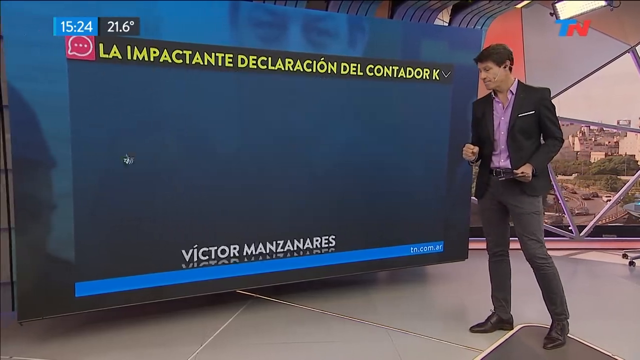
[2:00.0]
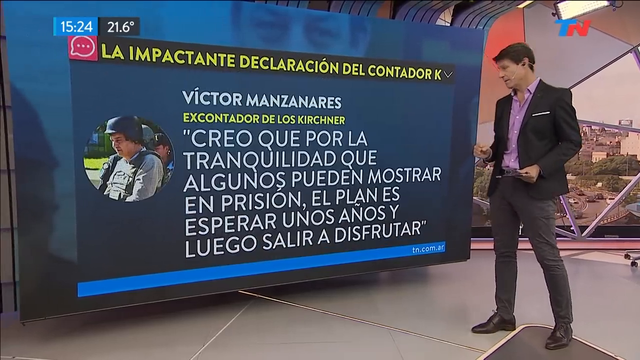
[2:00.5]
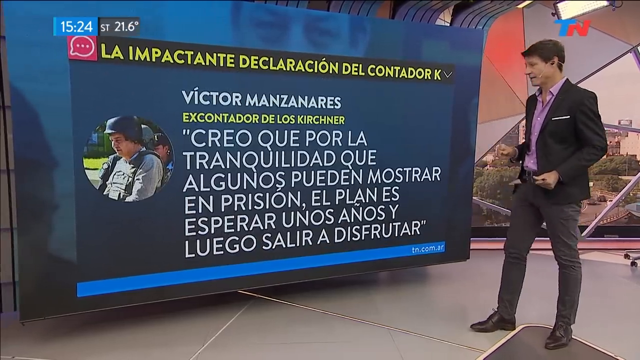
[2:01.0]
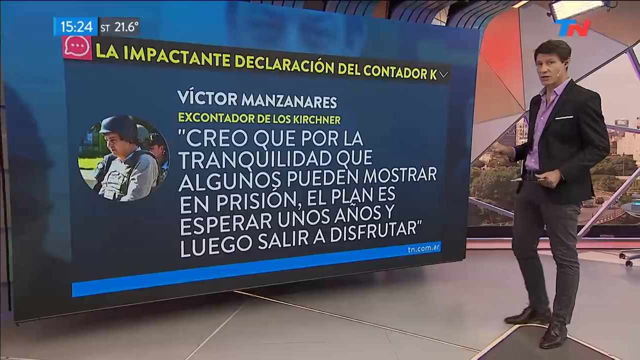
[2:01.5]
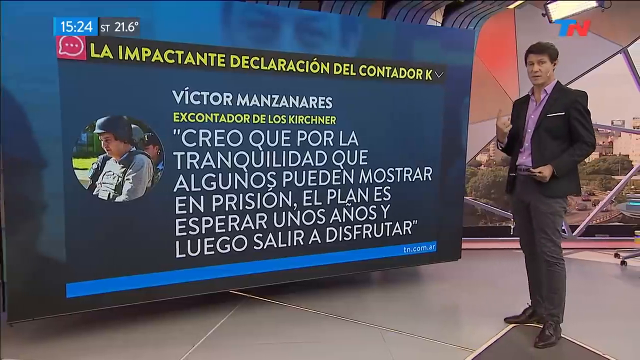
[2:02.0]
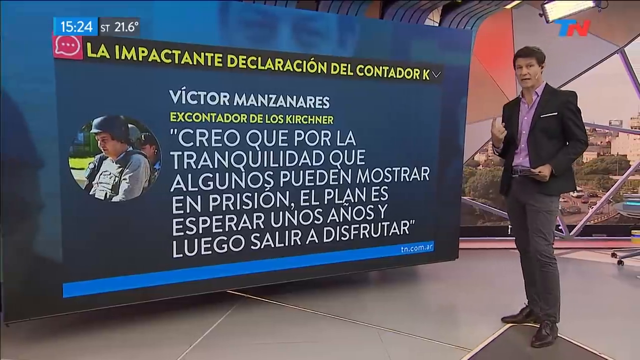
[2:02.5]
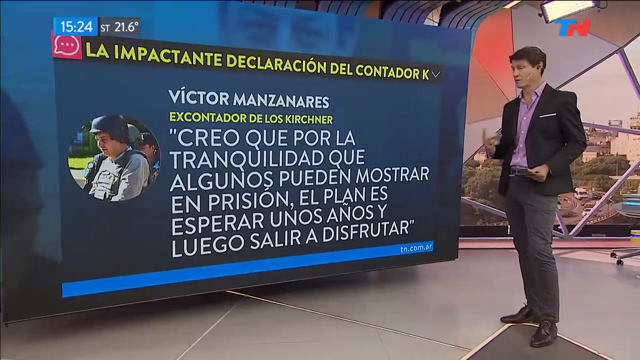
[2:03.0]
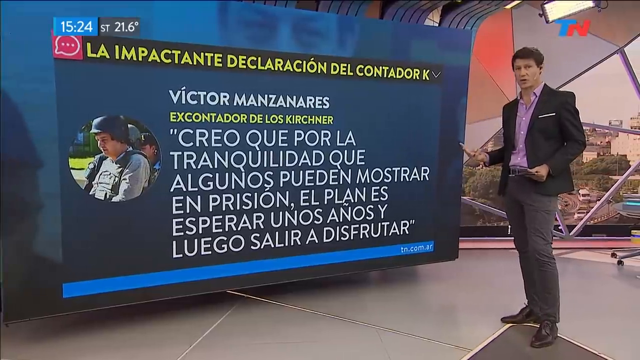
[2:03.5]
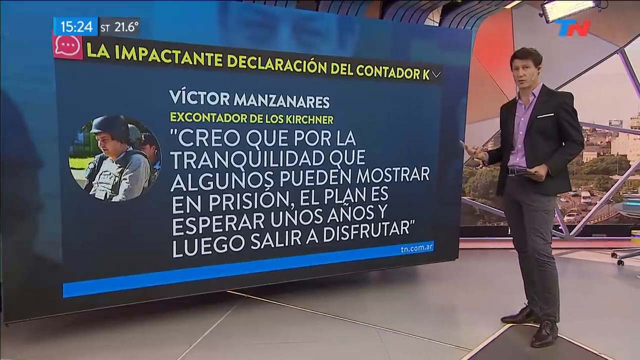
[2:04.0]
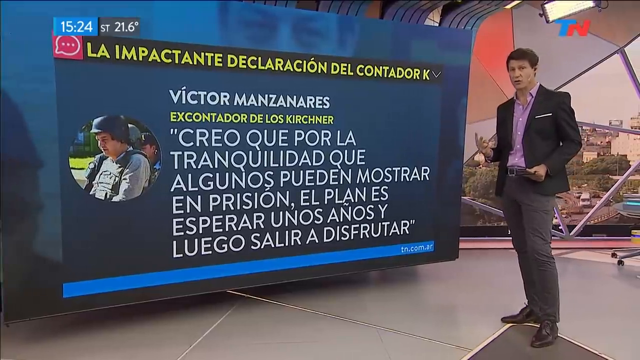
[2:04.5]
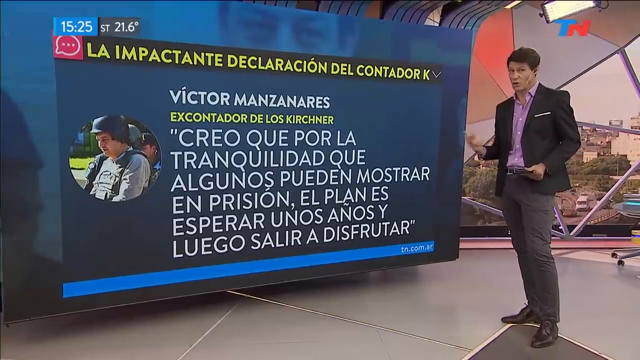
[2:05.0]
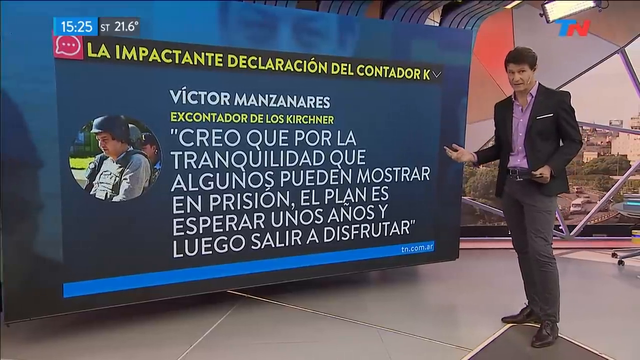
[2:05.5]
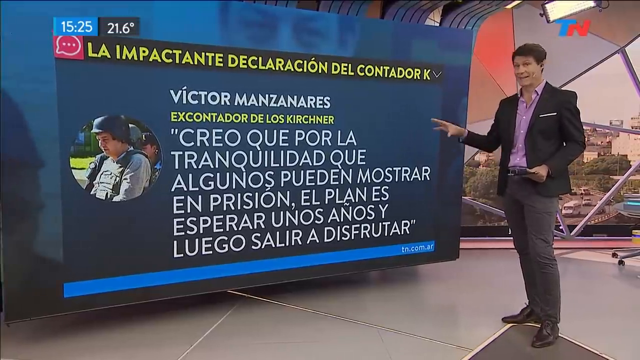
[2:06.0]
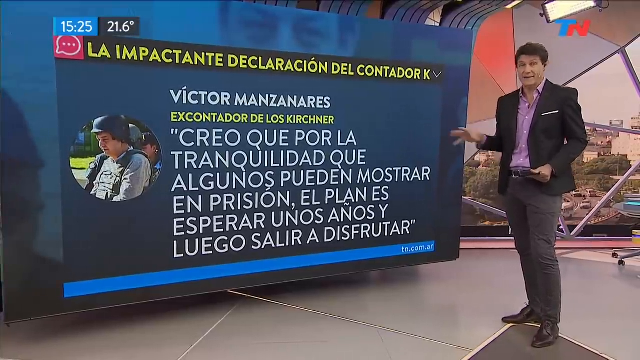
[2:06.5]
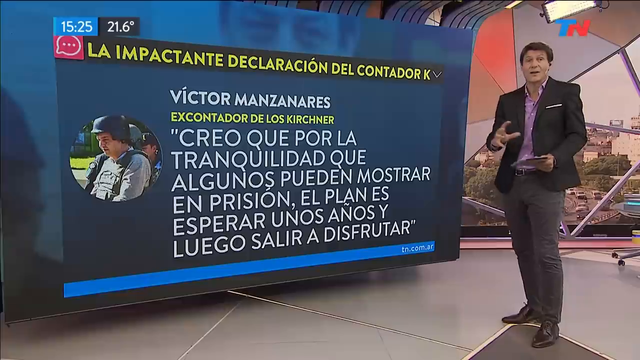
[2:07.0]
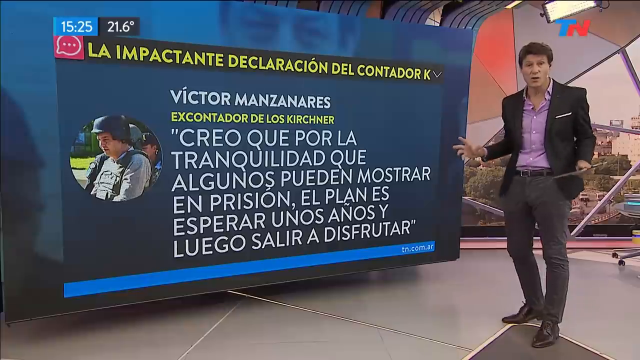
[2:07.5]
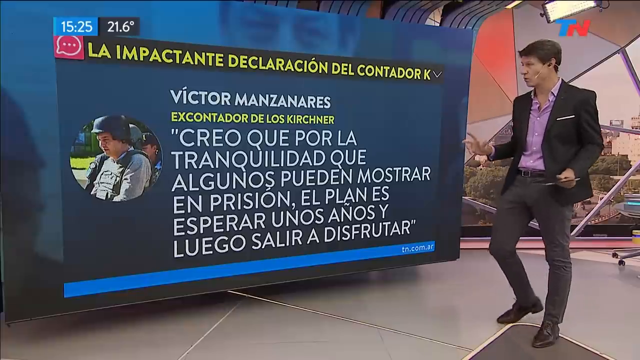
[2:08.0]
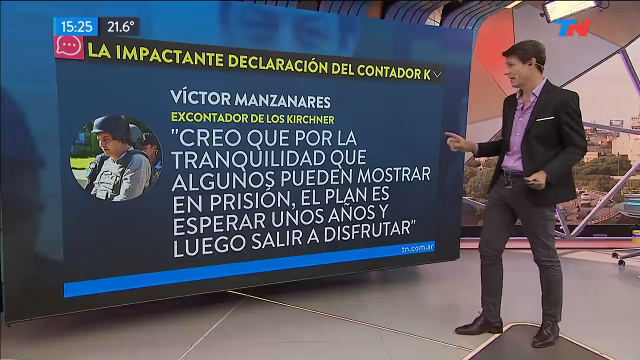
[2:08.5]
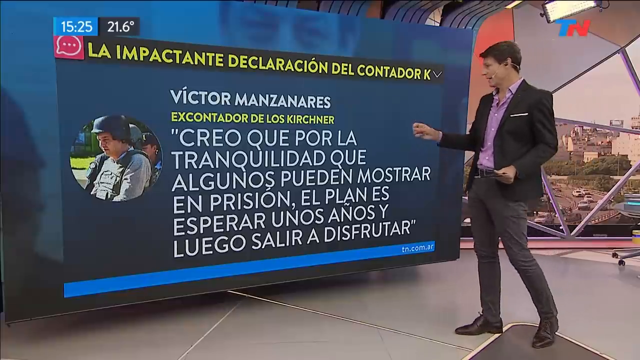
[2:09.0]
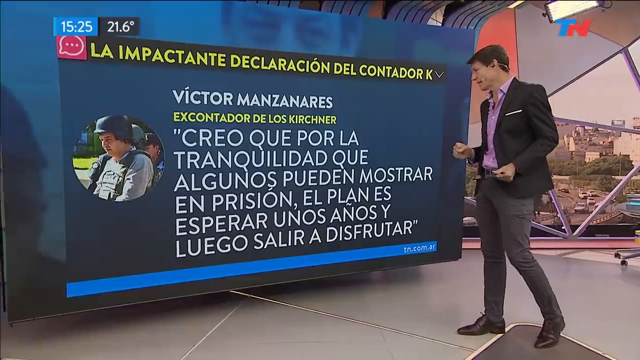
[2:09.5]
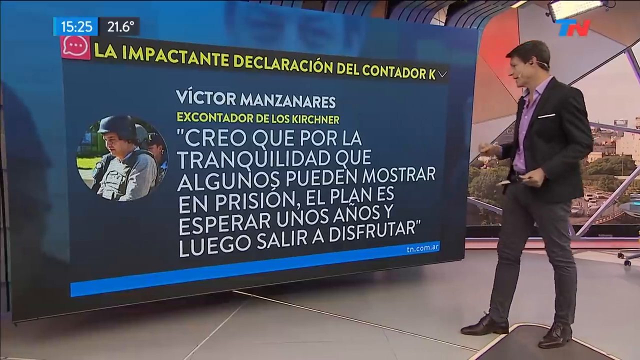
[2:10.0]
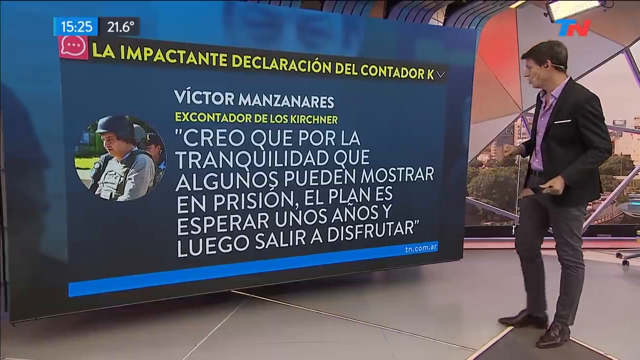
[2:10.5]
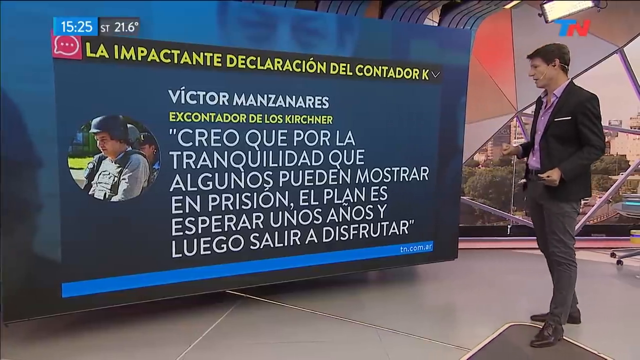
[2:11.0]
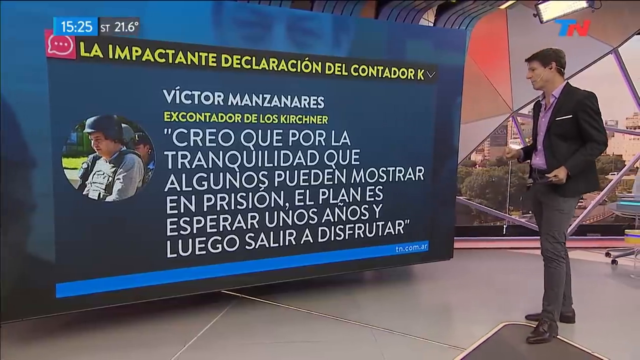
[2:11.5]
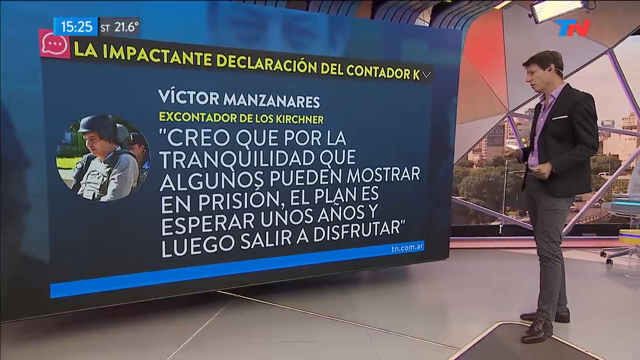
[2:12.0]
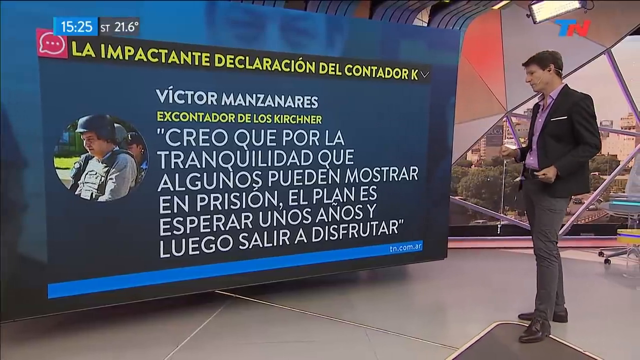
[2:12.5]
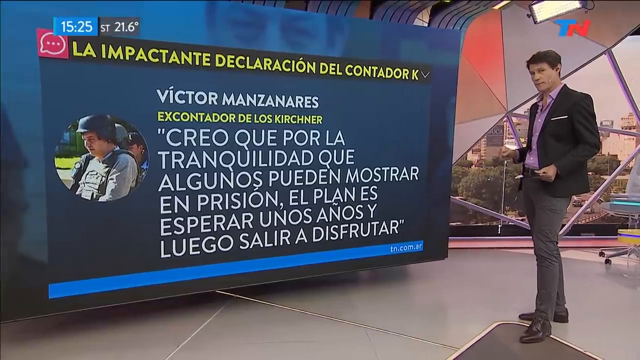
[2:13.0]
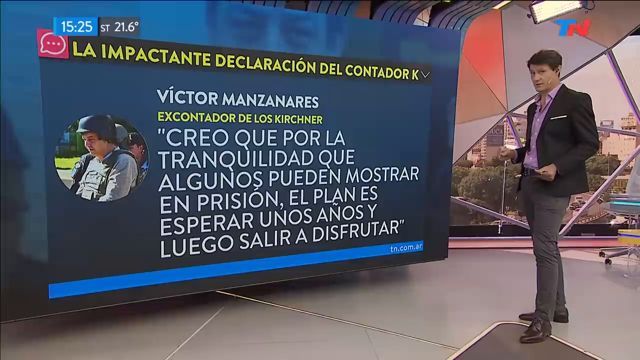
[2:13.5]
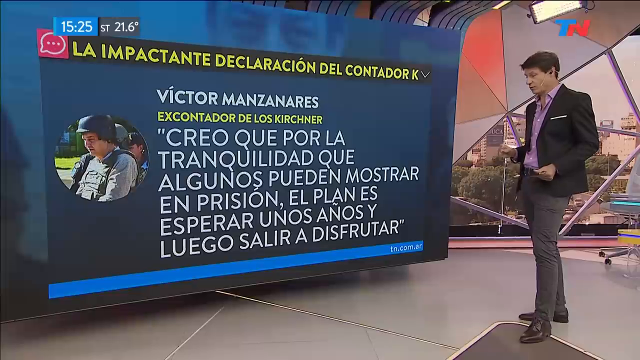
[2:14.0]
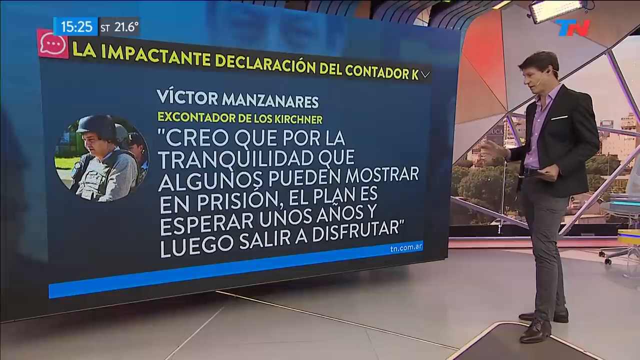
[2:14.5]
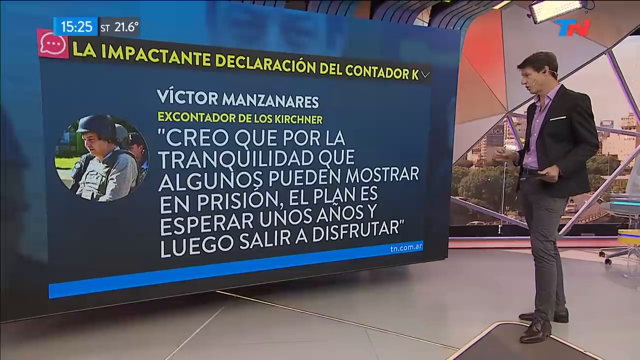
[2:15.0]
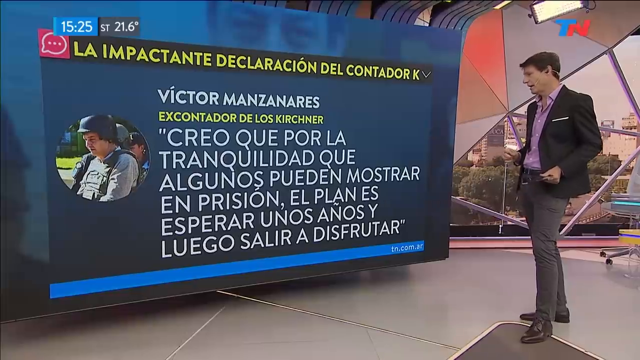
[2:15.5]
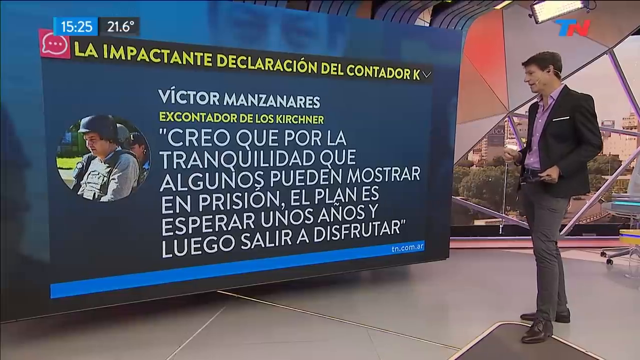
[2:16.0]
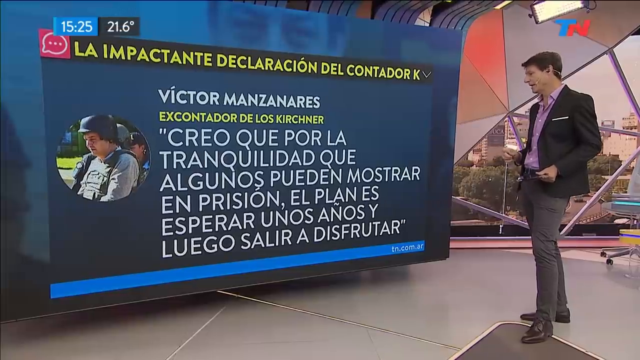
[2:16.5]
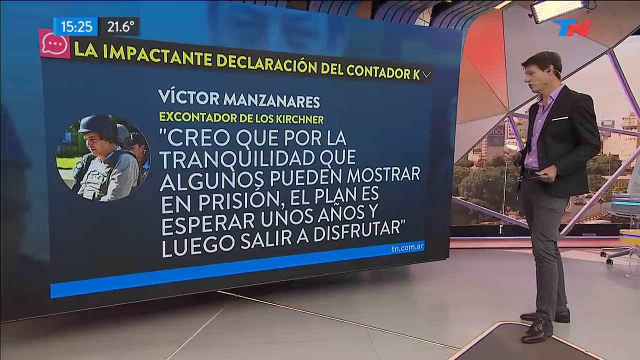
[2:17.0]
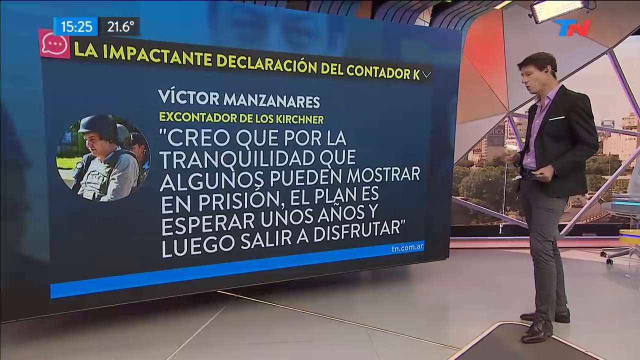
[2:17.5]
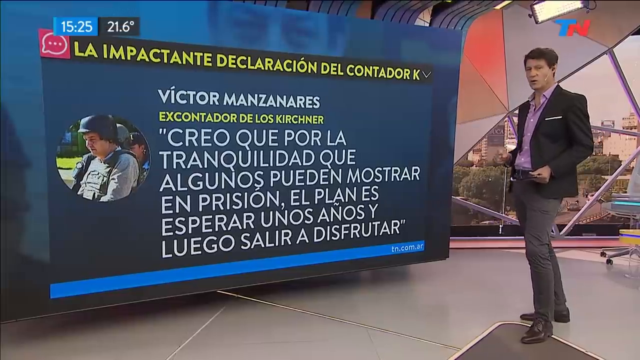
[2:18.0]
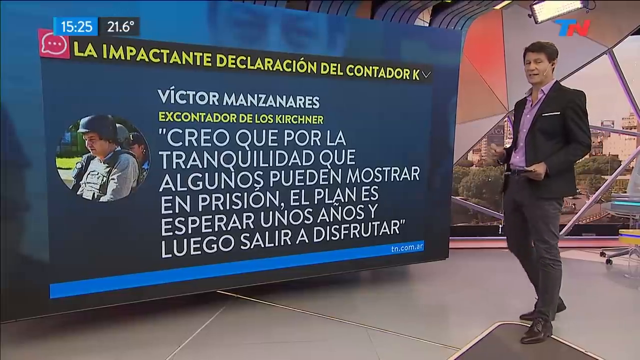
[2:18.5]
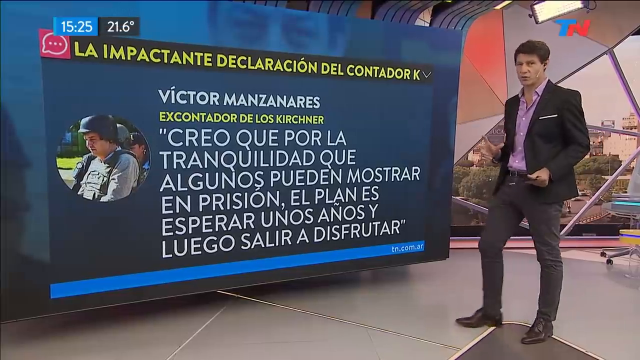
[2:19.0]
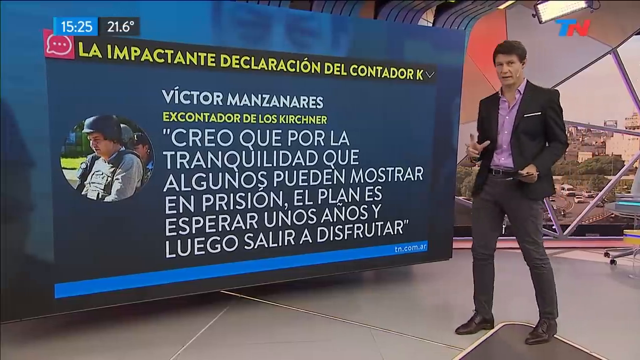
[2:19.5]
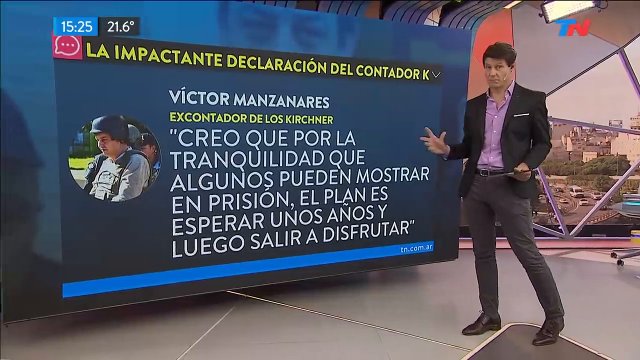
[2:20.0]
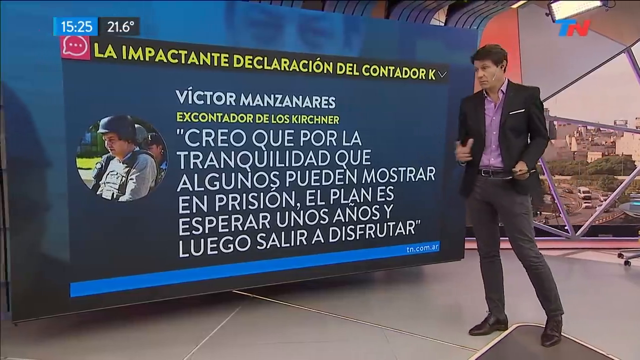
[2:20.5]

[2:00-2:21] New text seems to come up from the bottom to the top of the video screen he is looking at, a different part of the quote from the same person. He looks at the camera, briefly turns his head toward the video screen, looks back at the camera, and shrugs his shoulders for a moment. He points at the video screen for a moment, then mostly looks at the screen, apparently reading the quote on it. He steps slightly toward his left, maybe one step, faces the camera again, and shrugs his shoulders for a moment as the video ends. The time in the upper left corner now reads "1525", and the same logo remains in the upper right corner.